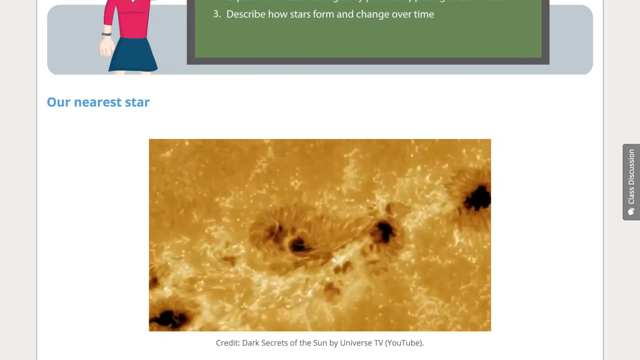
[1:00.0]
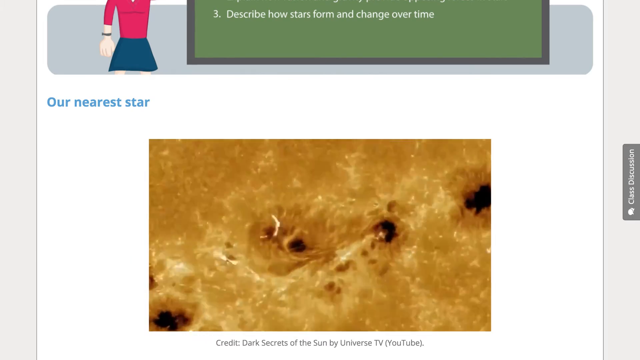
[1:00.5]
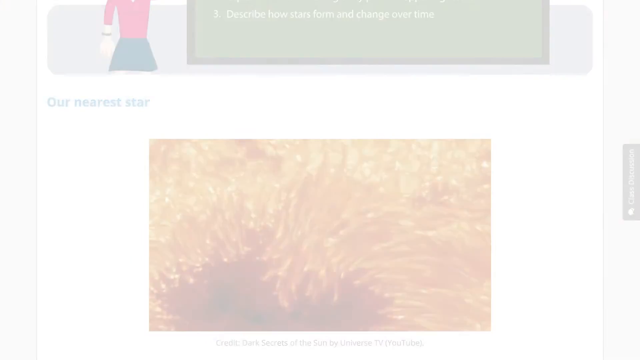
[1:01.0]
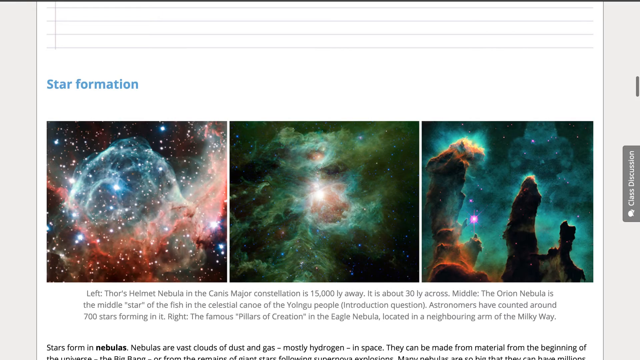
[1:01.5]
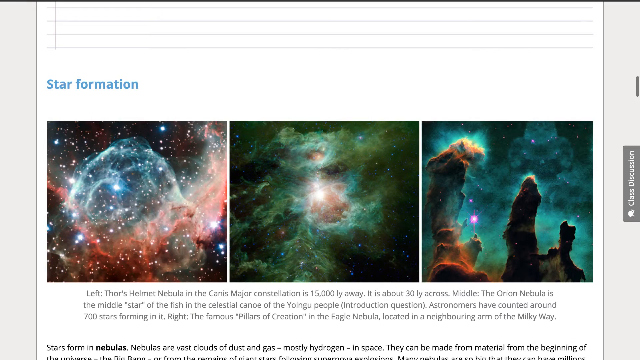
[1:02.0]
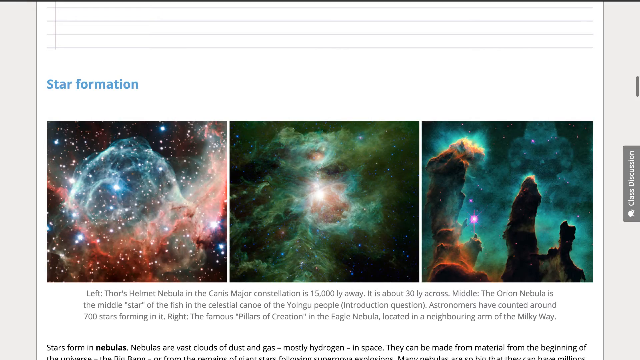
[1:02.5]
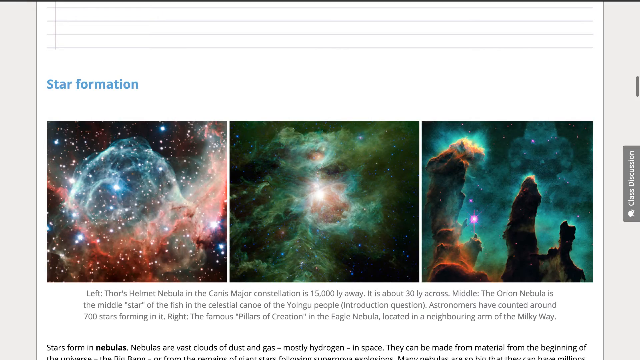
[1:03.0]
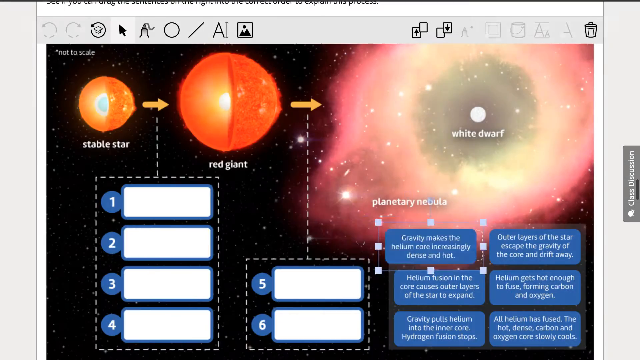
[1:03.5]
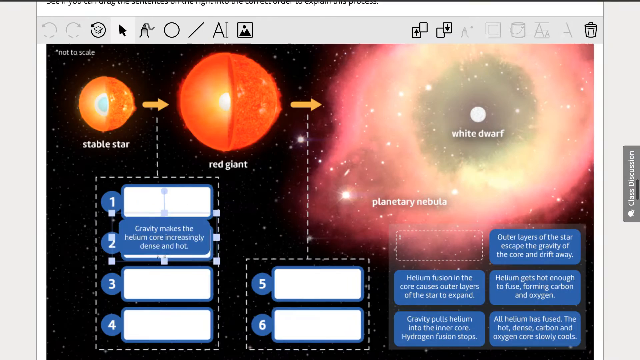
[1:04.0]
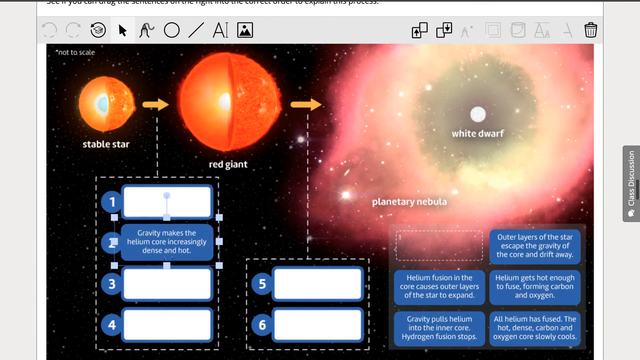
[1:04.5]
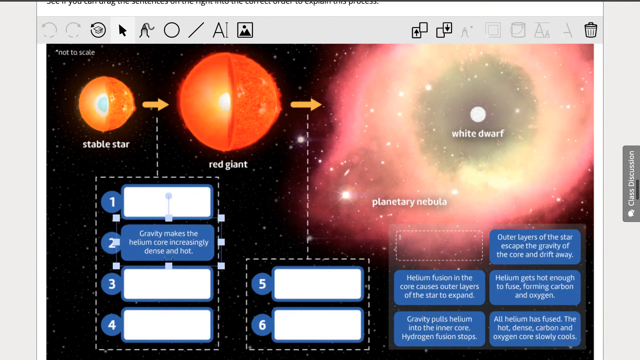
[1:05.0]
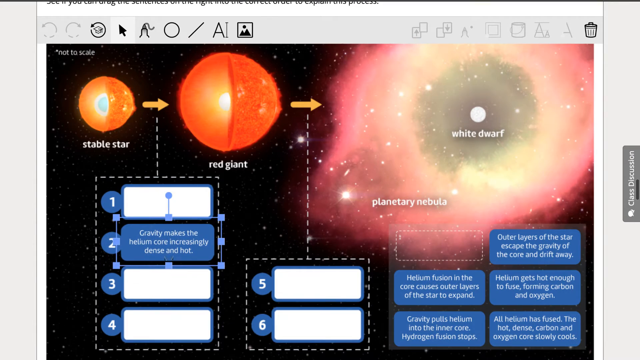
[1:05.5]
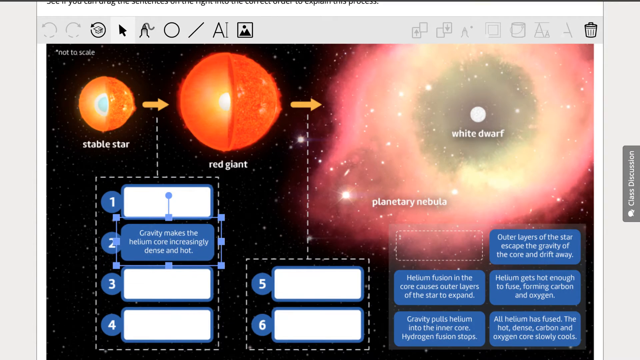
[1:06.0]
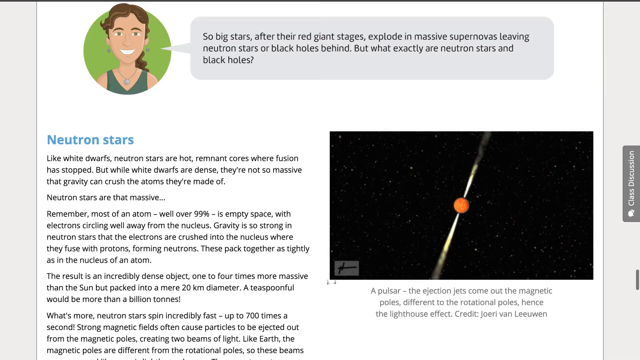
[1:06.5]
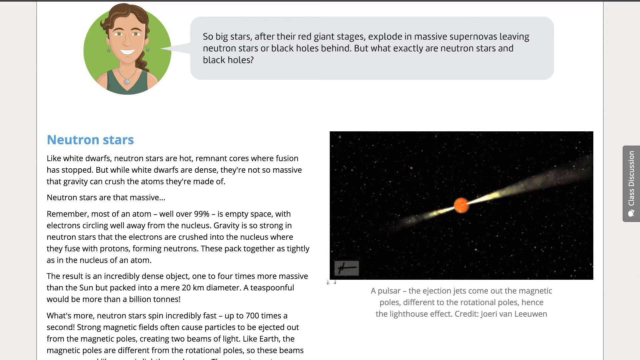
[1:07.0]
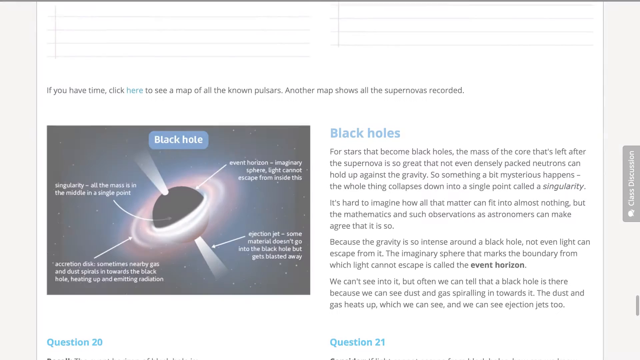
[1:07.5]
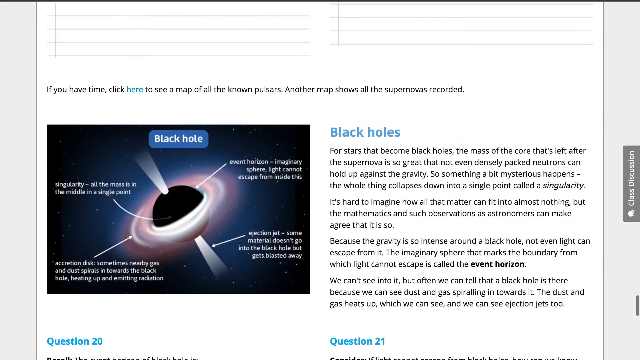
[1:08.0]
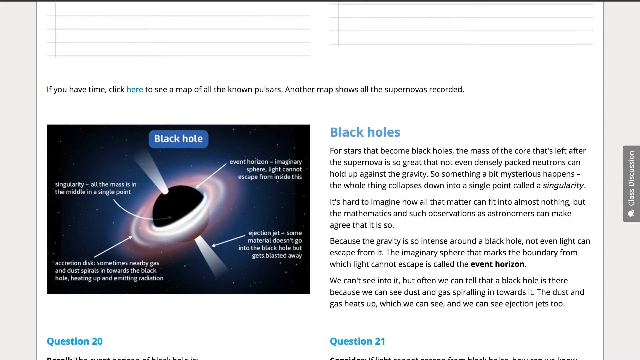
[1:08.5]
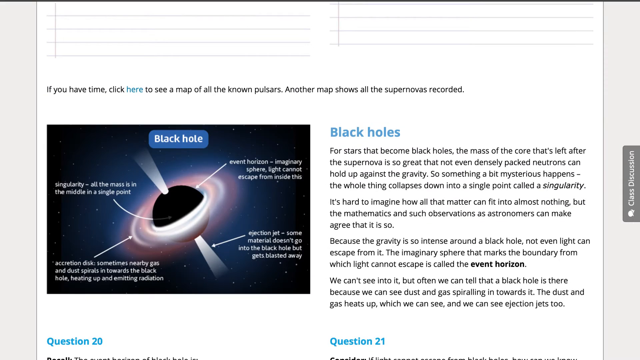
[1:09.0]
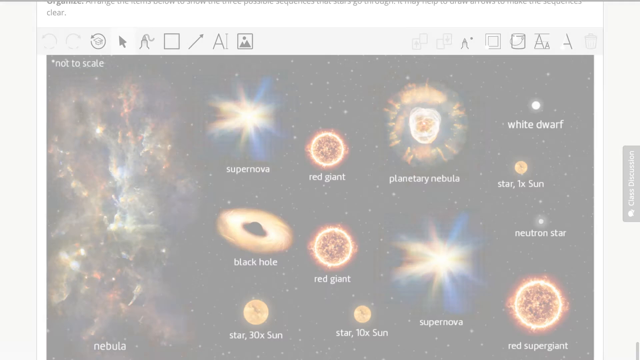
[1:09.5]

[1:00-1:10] A page about stars appears, seemingly where students can place the different kinds of stars in categories. There are photos of a stable star, which turns into a red giant, and then a nebula and a white dwarf, with the star having exploded and become a nebula. Below are different definitions that can be selected and put into boxes numbered 1, 2, 3, 4, 5 and 6. The first four boxes are underneath the stable star, so they are probably definitions relating to the stable star, and boxes five and six are underneath the red giant. The page then moves on to neutron stars and black holes.